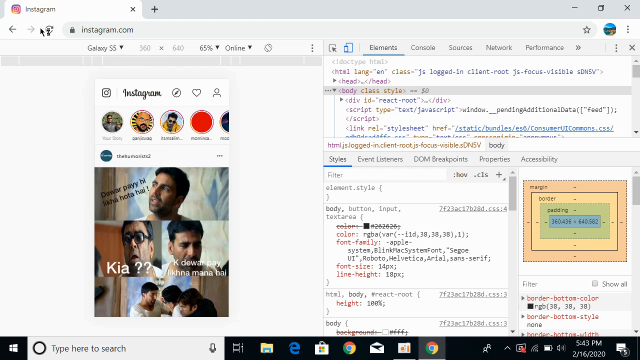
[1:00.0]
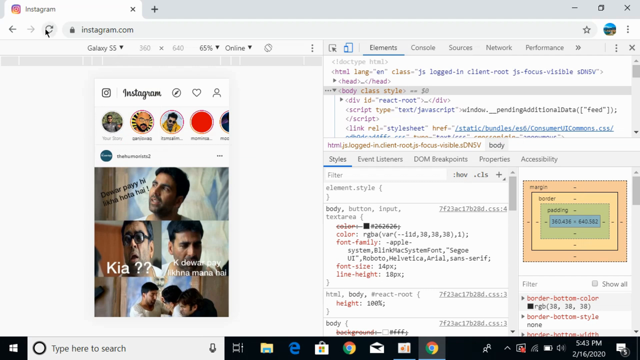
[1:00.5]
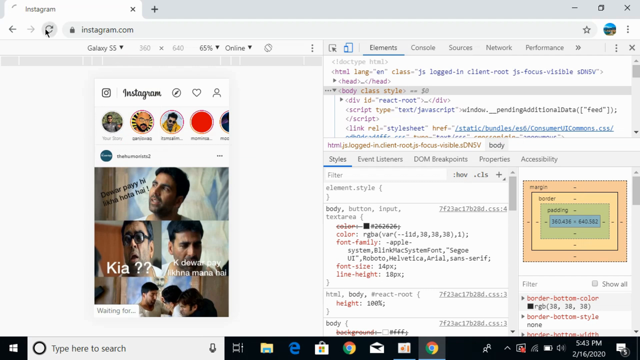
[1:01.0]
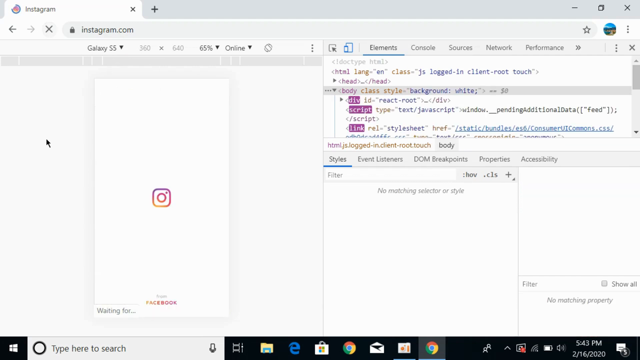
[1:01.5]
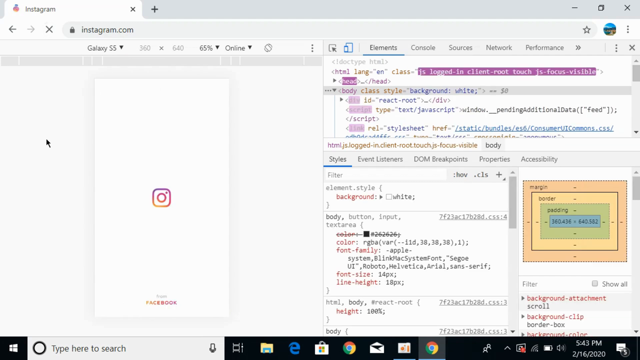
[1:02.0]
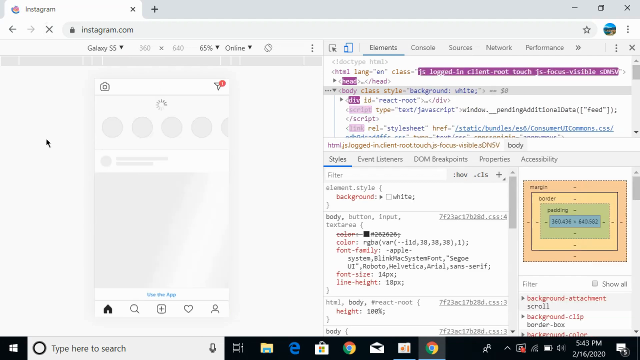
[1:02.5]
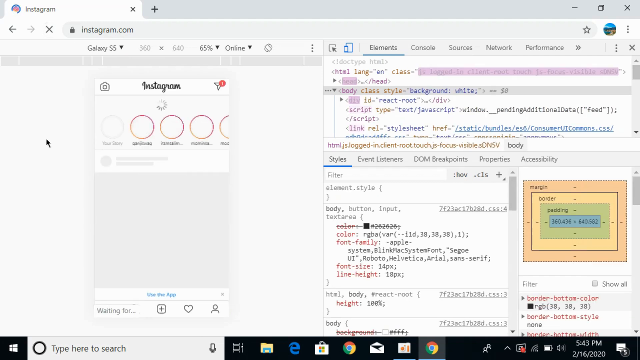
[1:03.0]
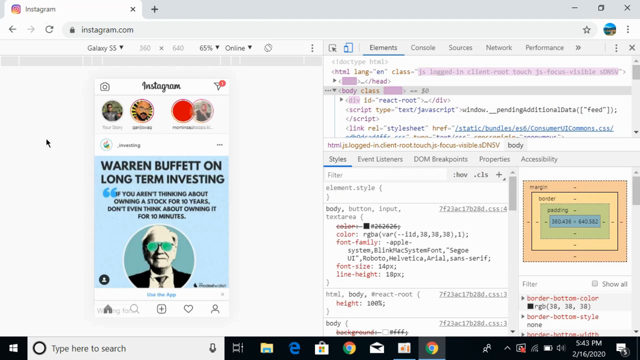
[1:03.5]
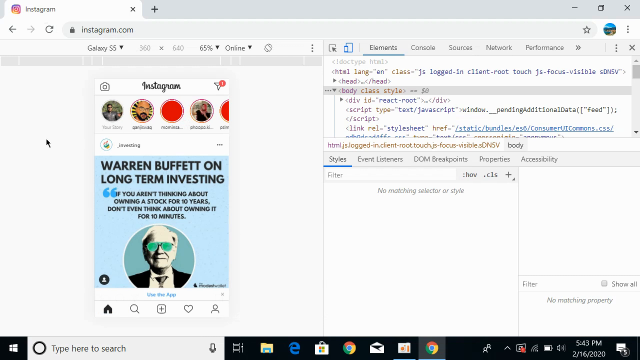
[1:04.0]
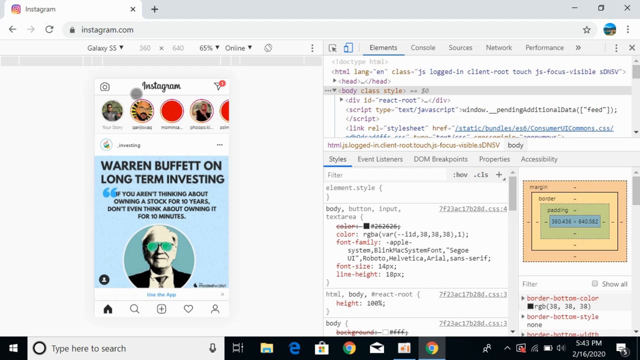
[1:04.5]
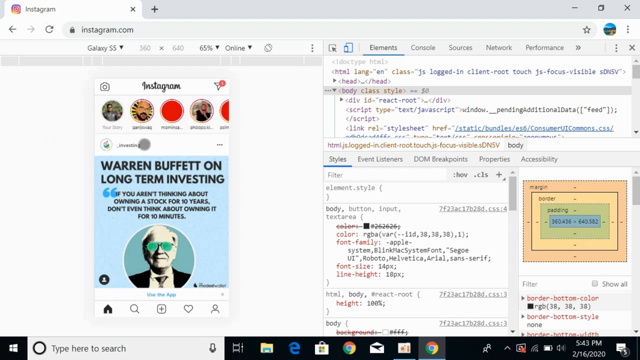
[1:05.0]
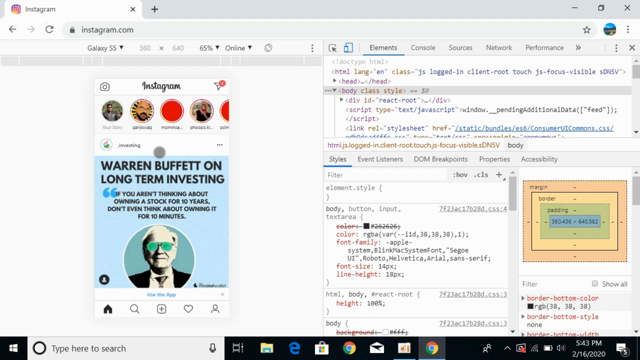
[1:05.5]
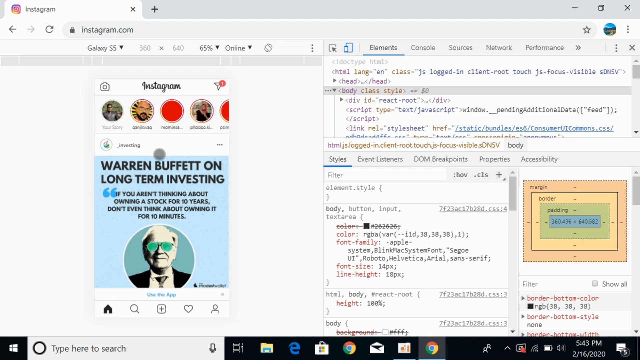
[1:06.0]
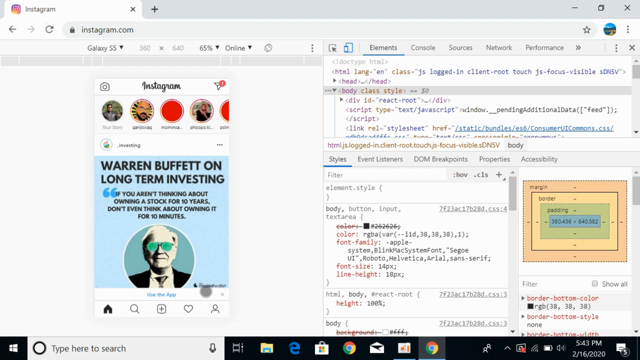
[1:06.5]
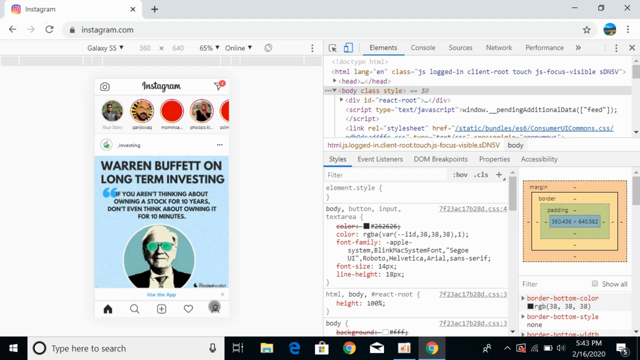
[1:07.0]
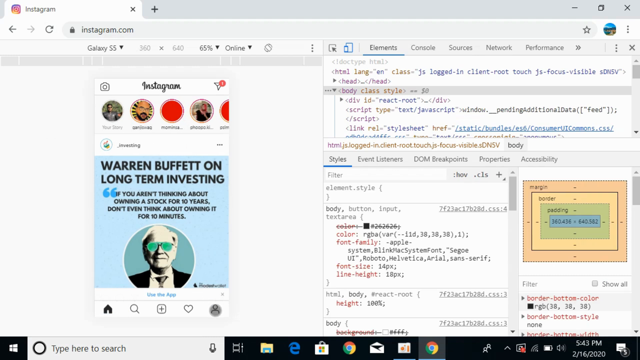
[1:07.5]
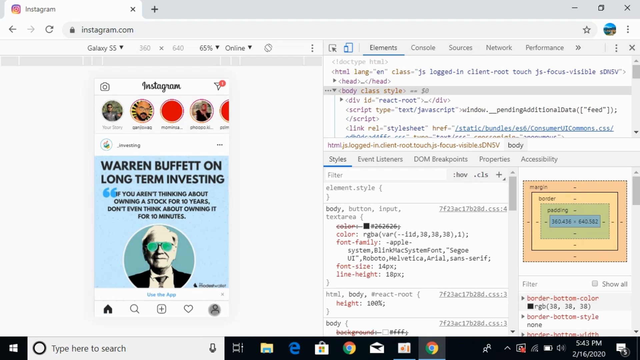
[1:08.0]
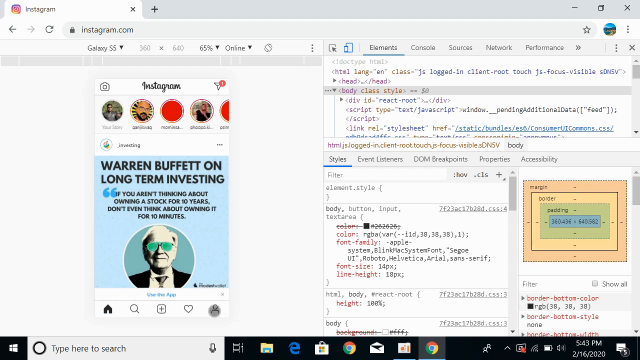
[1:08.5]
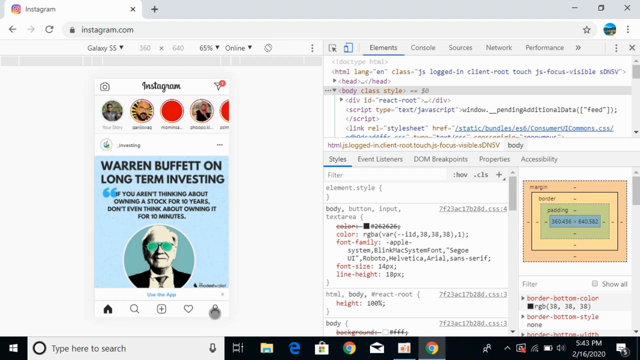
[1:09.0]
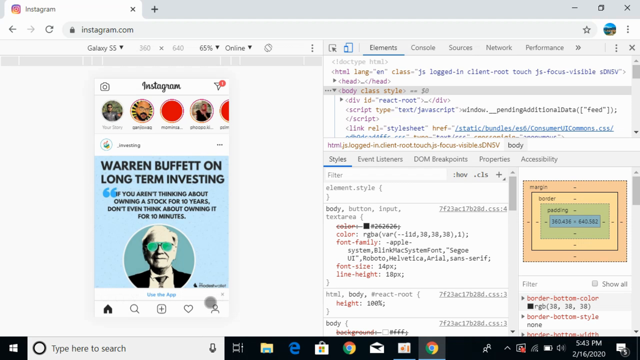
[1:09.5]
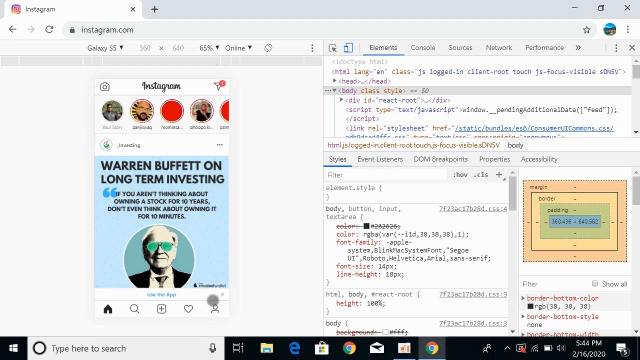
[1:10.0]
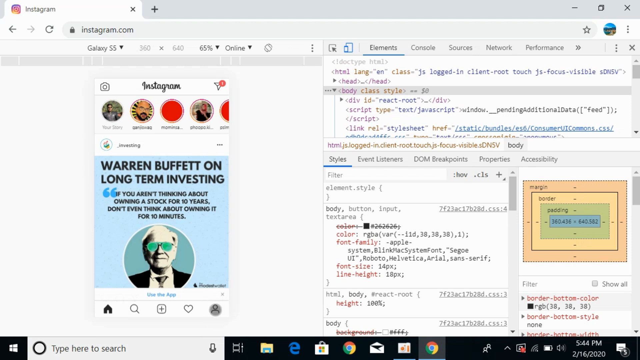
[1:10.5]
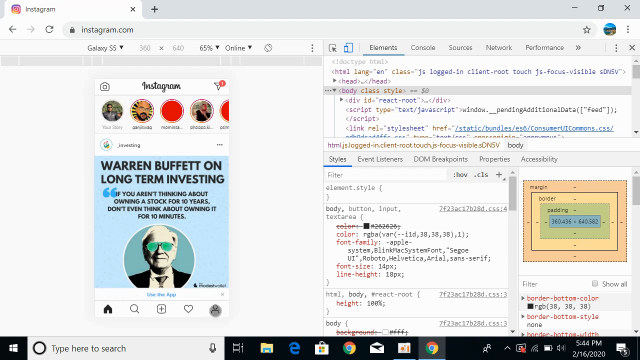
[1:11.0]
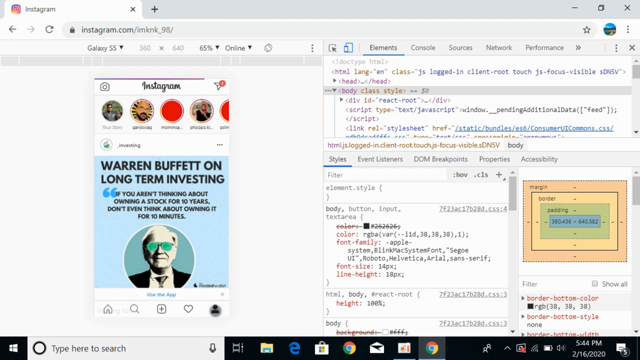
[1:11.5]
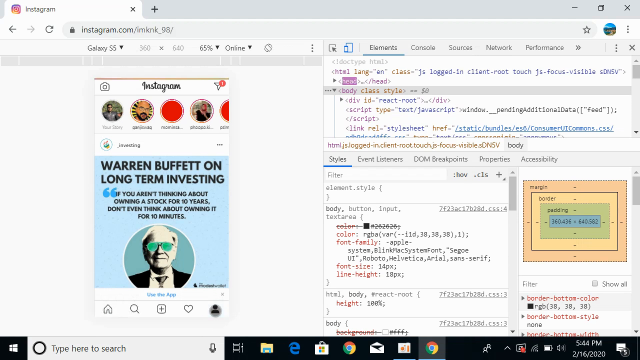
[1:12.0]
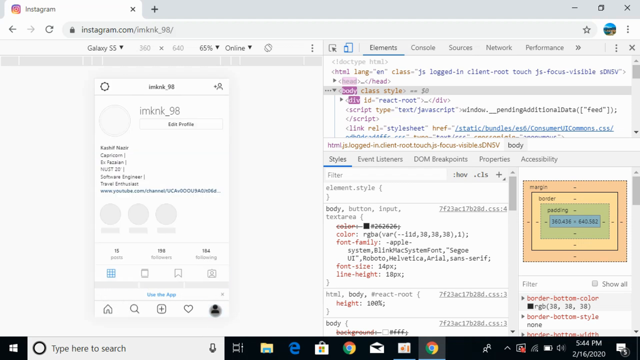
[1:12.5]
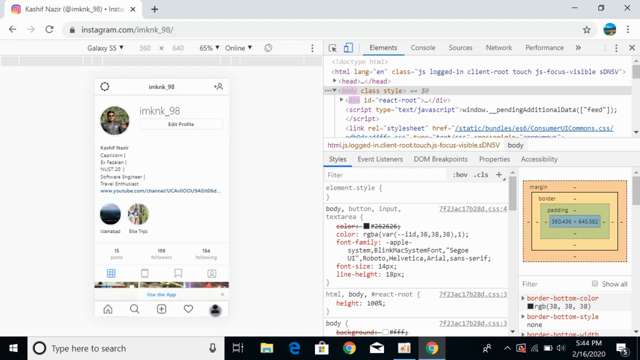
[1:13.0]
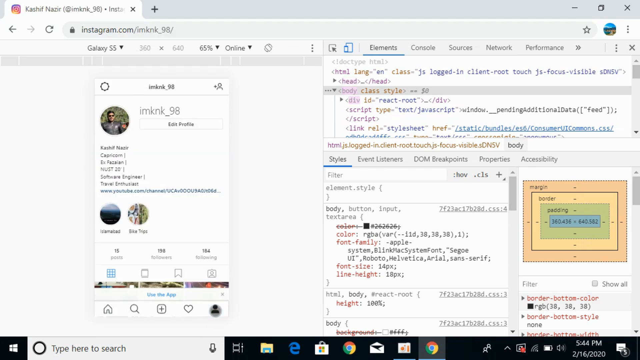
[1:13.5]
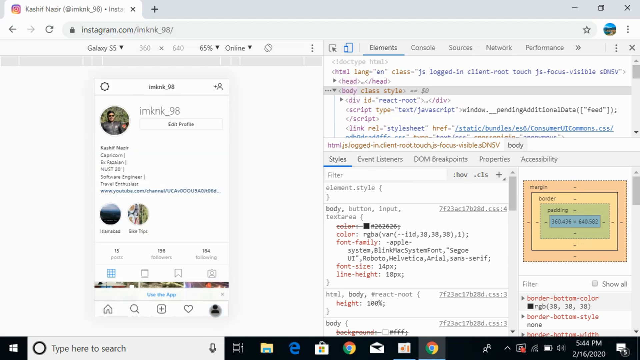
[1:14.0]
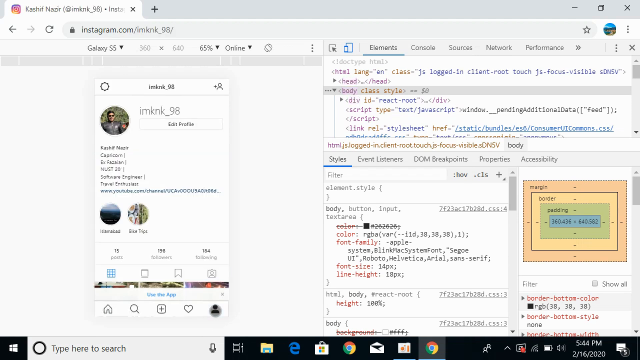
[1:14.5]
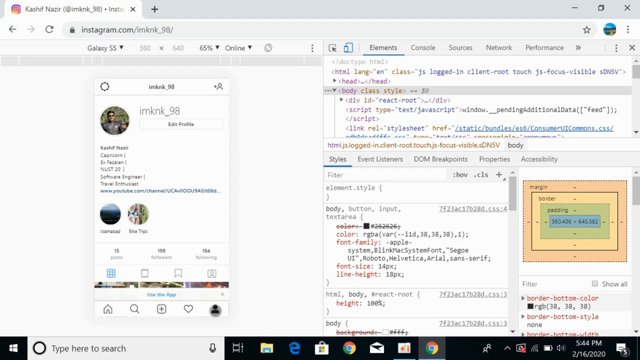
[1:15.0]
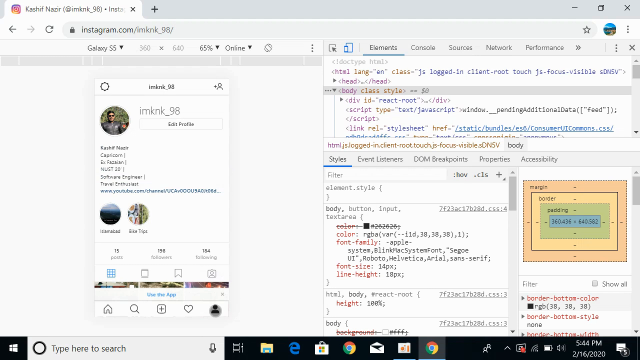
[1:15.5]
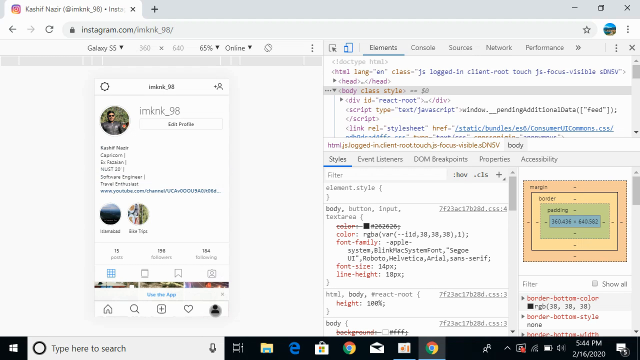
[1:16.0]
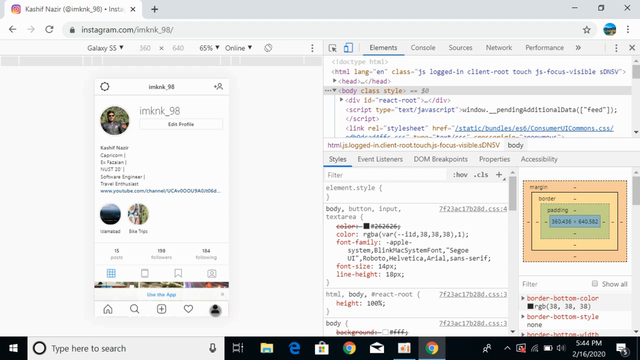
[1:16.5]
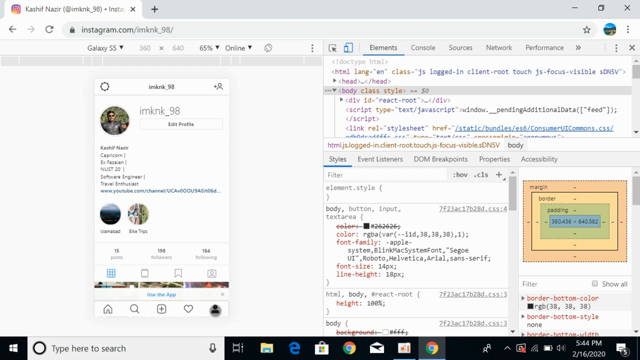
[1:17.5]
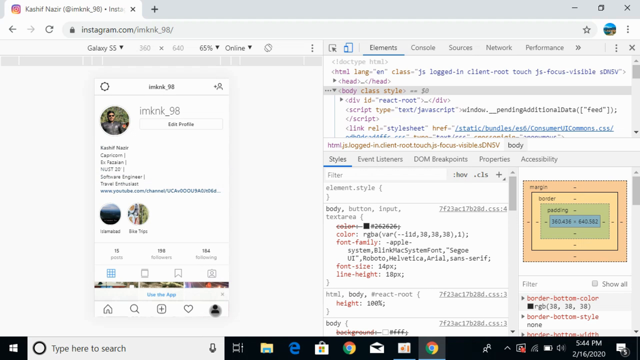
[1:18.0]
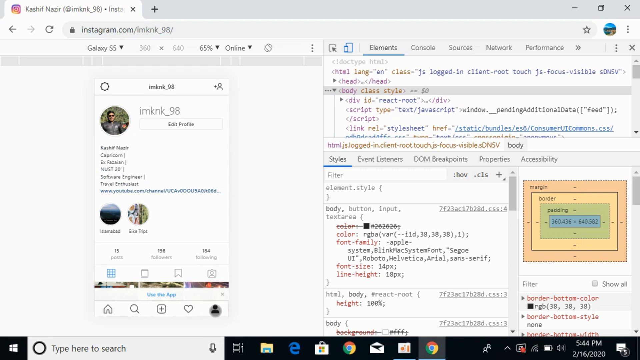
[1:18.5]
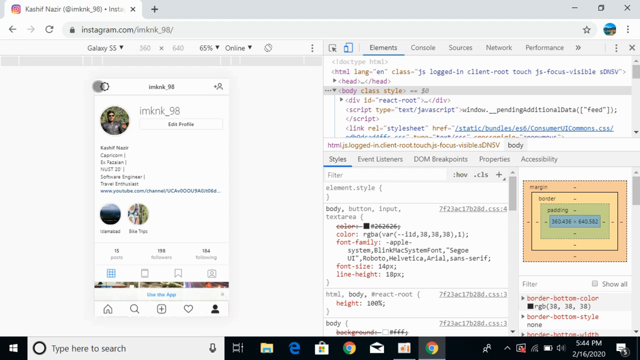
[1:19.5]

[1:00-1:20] The screen is split into two: one side shows an Instagram page with a male profile, the man appearing to be in his 40s, and the right side shows a developer tools window. The user clicks the refresh icon in the corner and the Instagram page refreshes. They then click at the bottom, in the corner for the profile details, and the details of the Instagram account appear on the left side of the screen. The Instagram description, stories, pictures, reels, following, likes and posts are clearly visible.